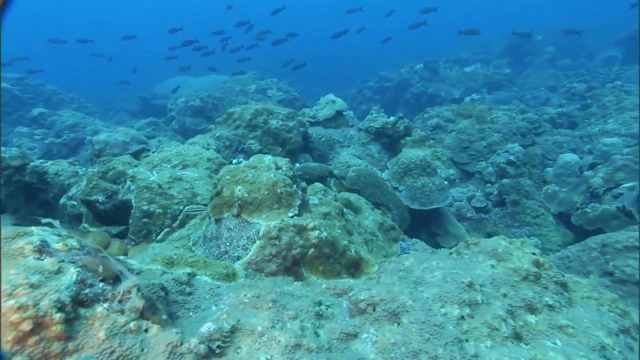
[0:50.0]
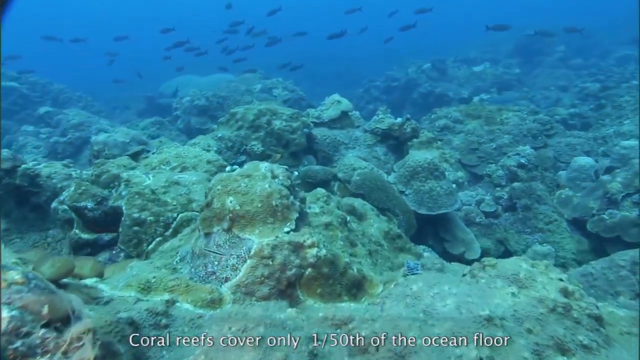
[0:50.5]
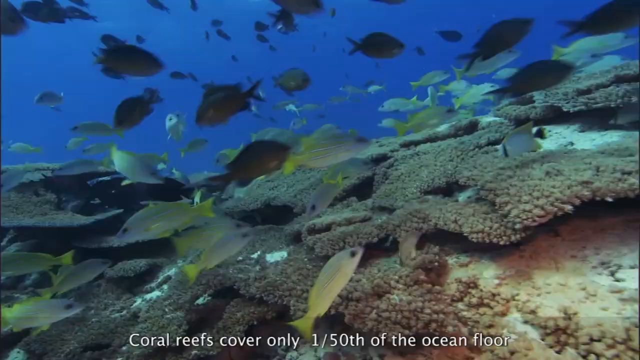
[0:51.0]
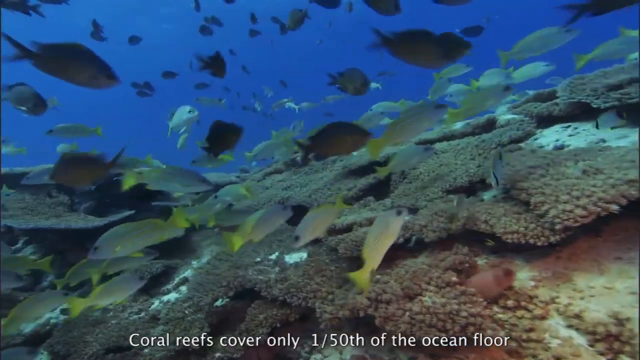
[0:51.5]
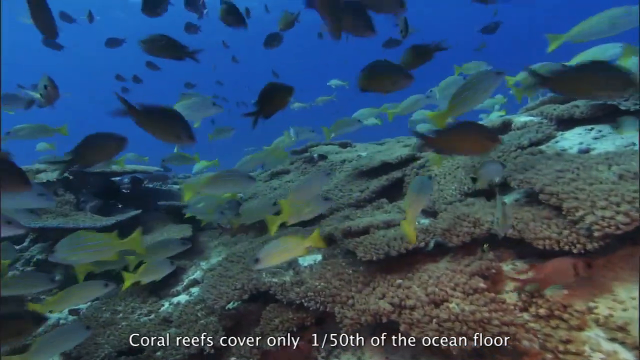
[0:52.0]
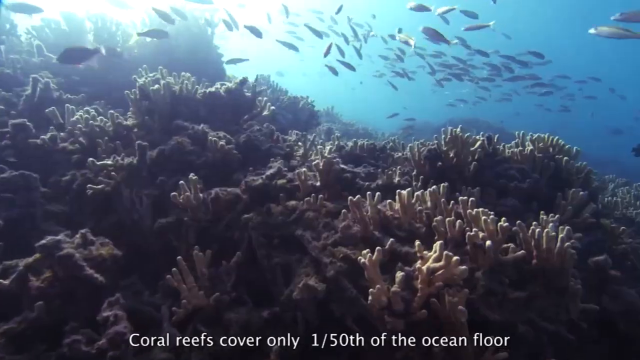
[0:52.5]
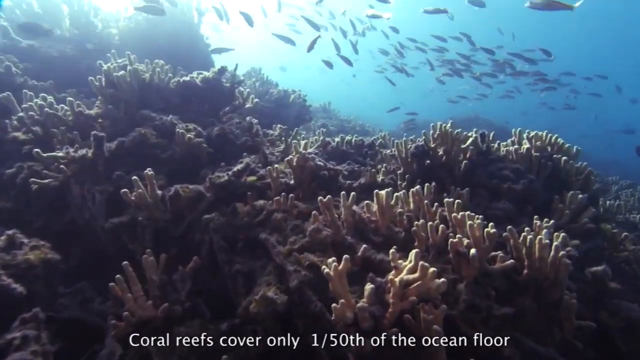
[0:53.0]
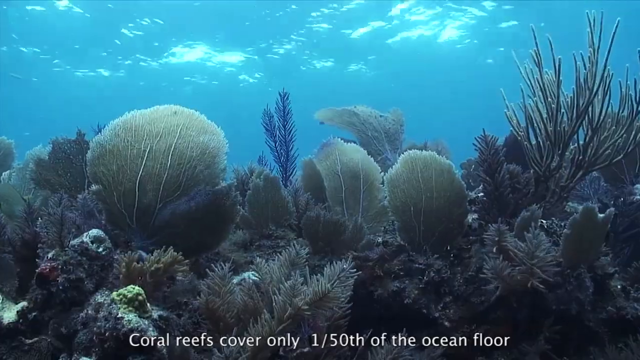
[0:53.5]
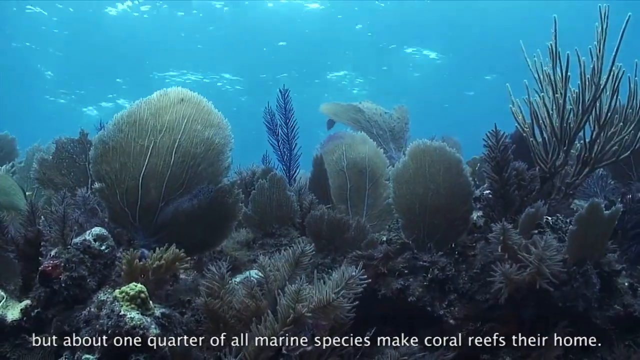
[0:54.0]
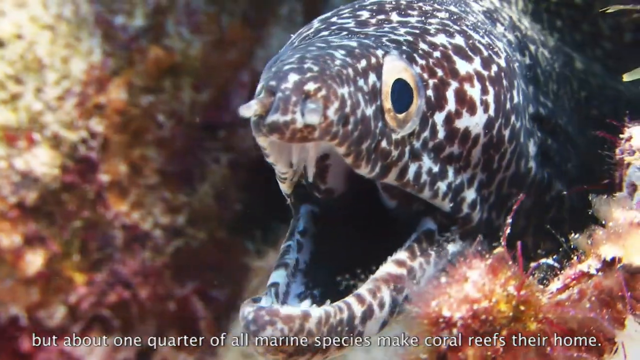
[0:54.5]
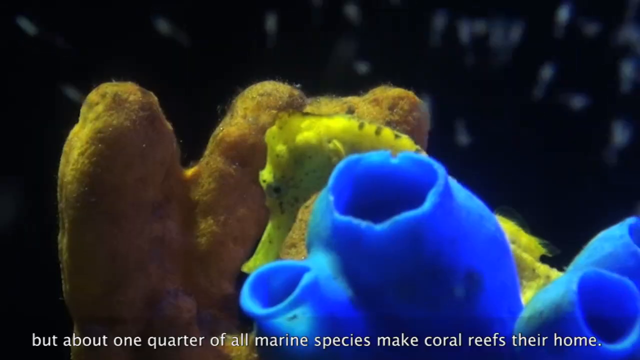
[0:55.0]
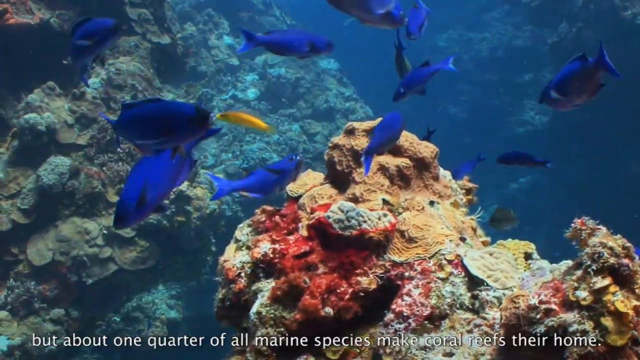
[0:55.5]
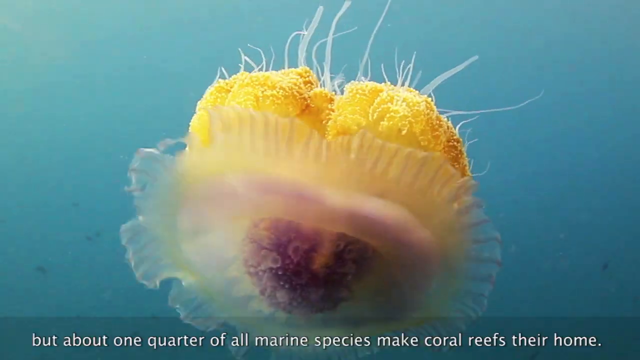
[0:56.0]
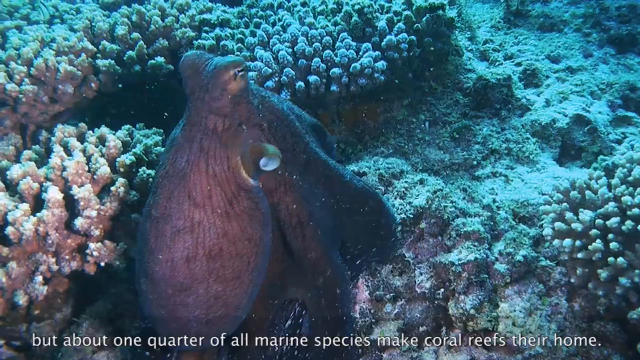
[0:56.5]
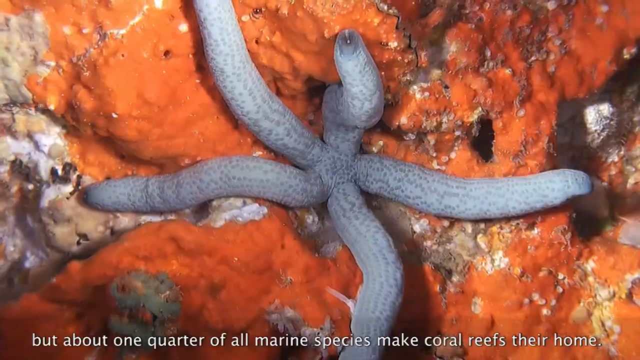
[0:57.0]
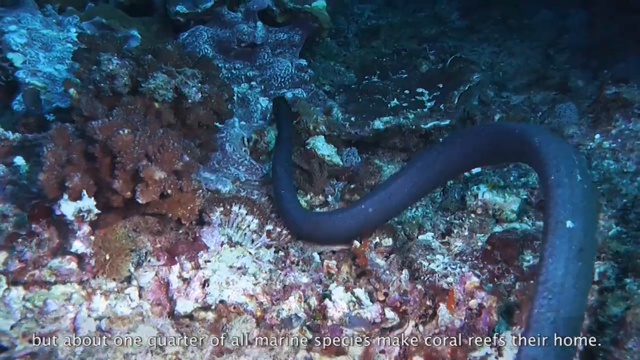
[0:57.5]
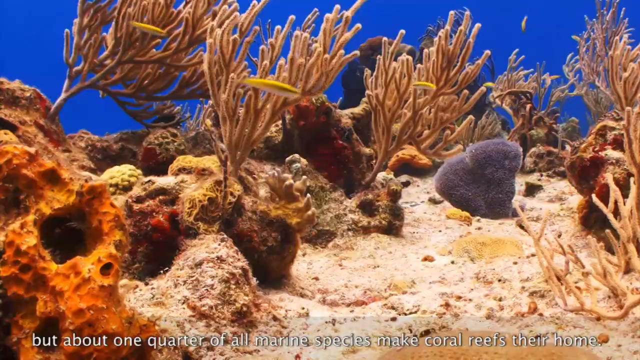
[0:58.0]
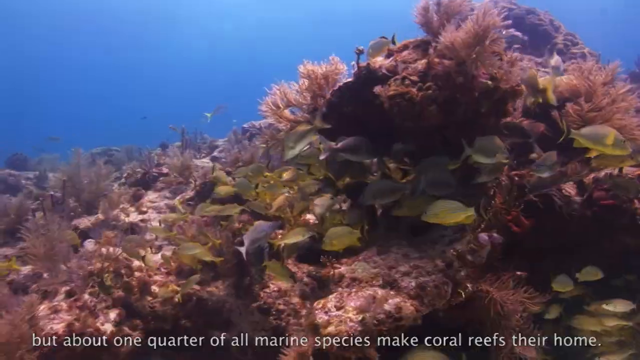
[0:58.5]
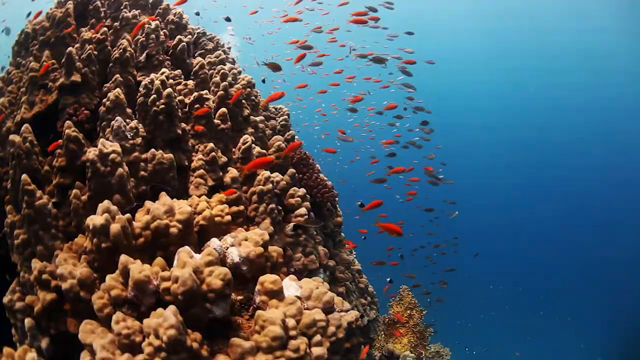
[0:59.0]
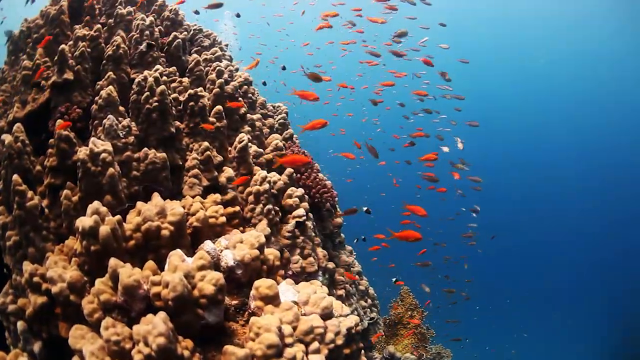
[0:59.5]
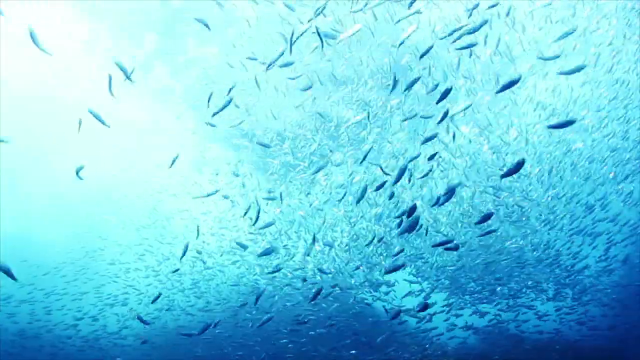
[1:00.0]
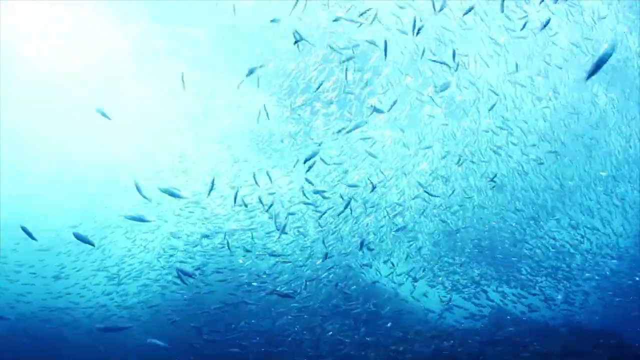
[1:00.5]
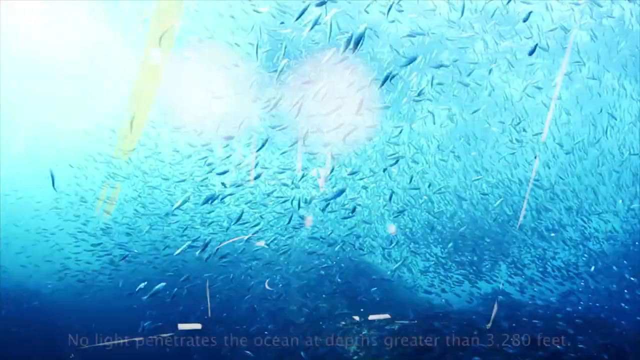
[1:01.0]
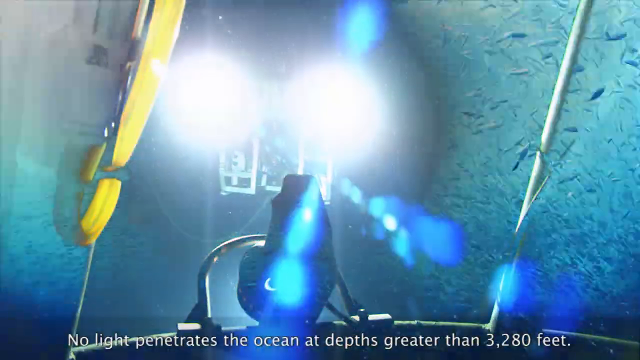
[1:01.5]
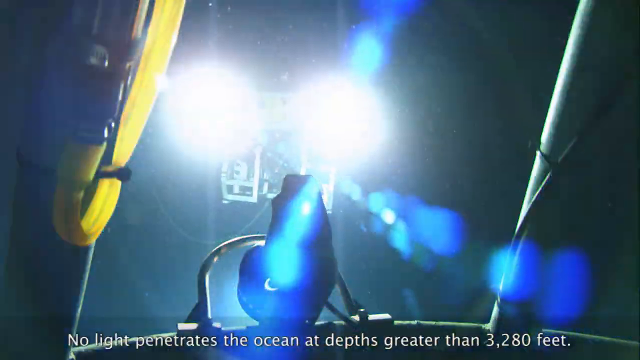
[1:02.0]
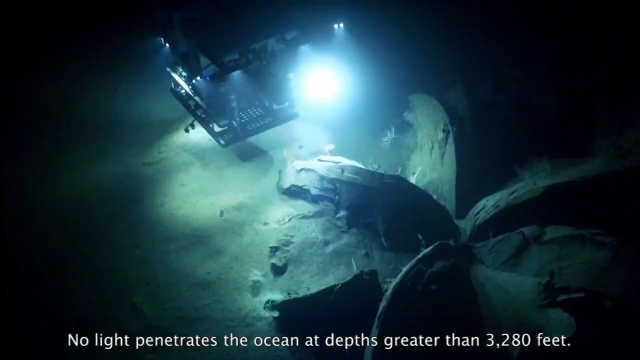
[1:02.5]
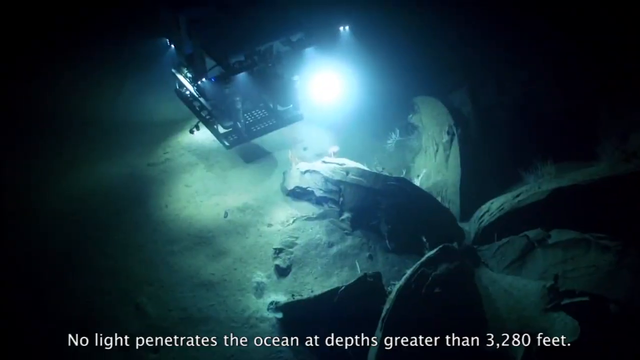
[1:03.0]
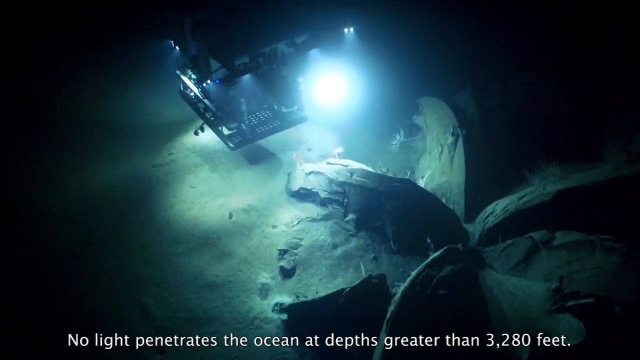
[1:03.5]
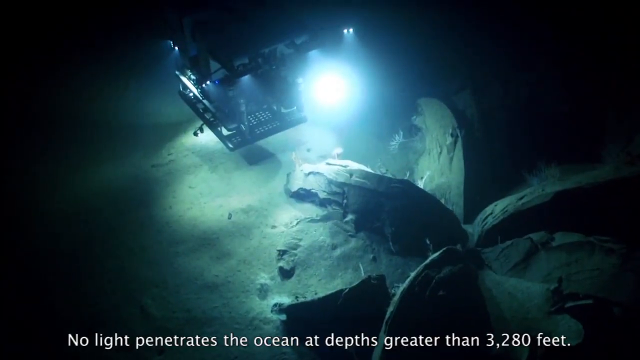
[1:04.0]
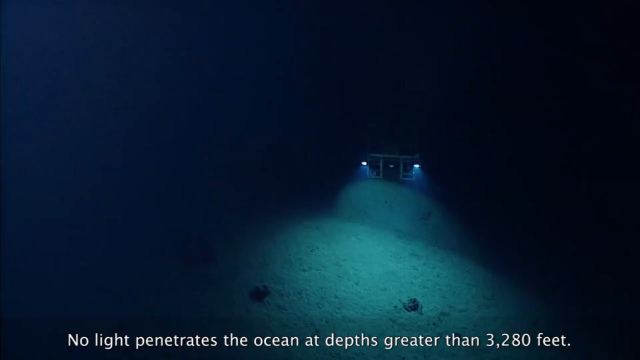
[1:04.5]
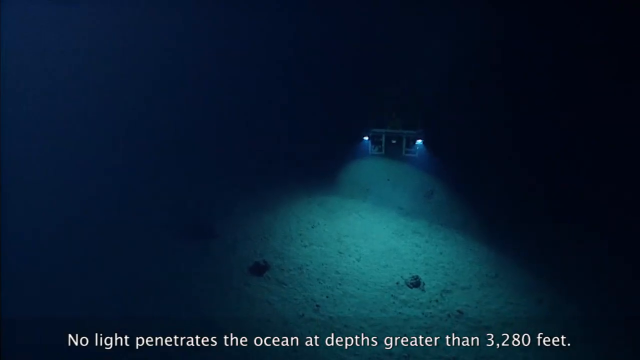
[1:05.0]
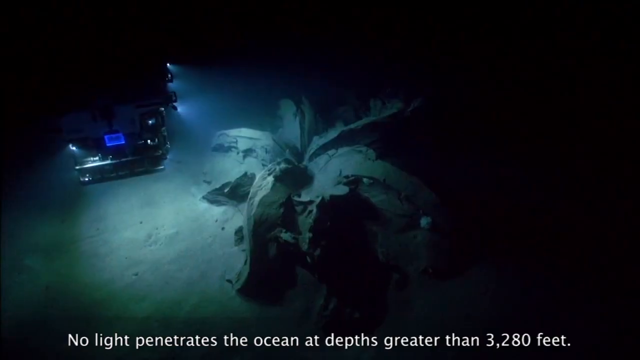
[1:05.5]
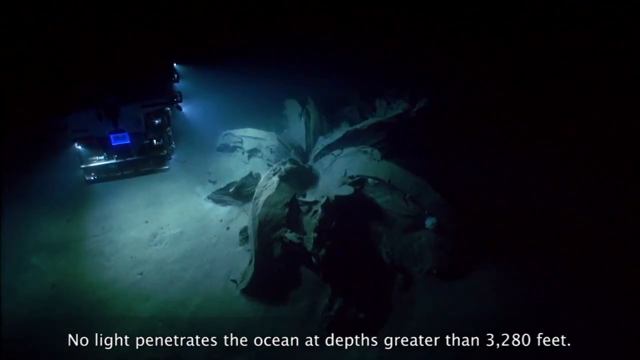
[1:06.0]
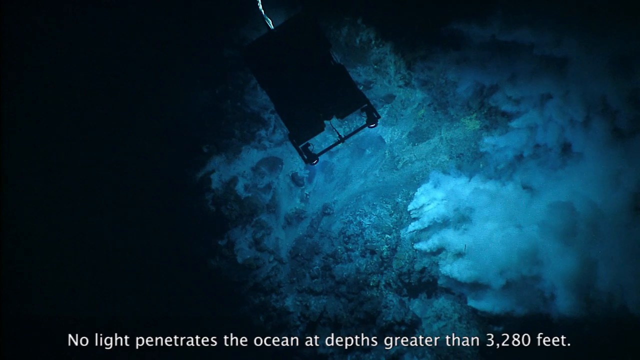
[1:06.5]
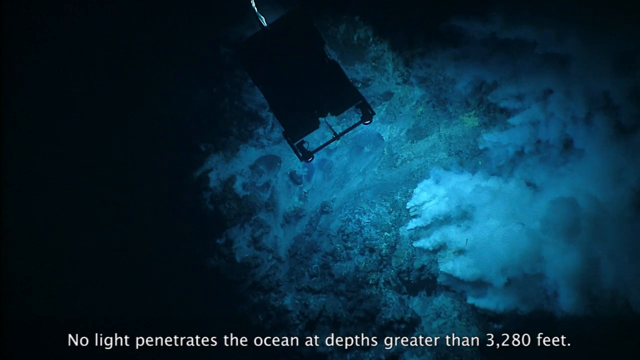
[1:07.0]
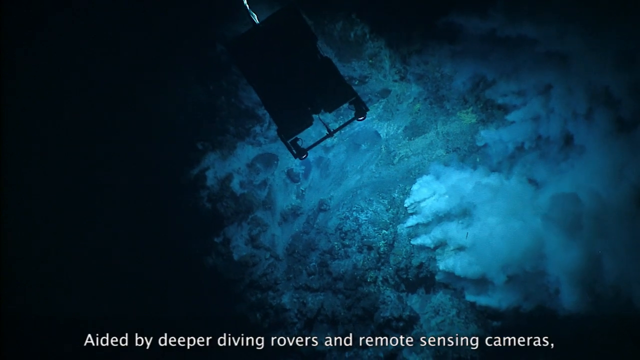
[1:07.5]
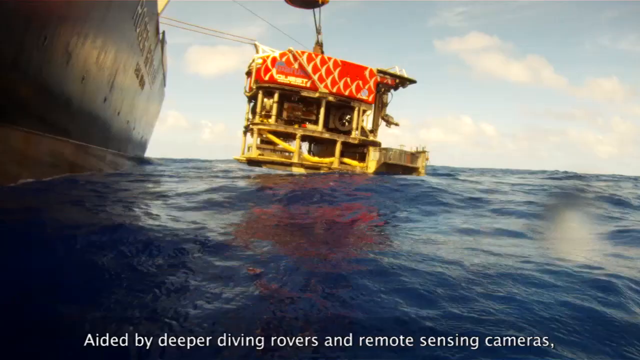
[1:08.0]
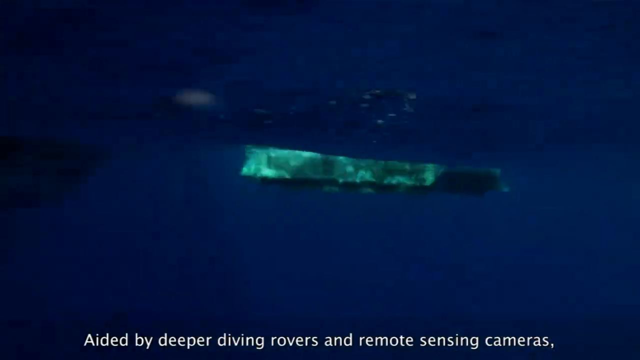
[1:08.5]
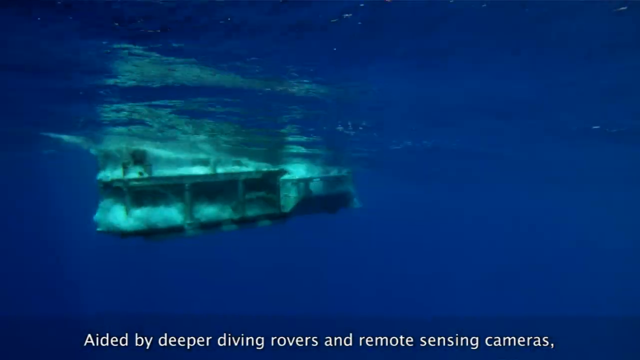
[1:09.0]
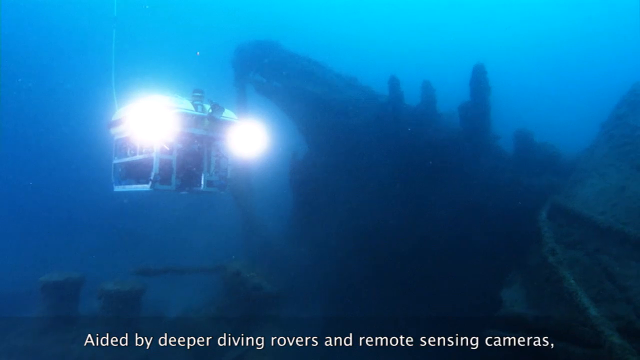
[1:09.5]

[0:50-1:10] The video shows that light can't really be seen at certain depths of the ocean; light reaches only small areas at close range.